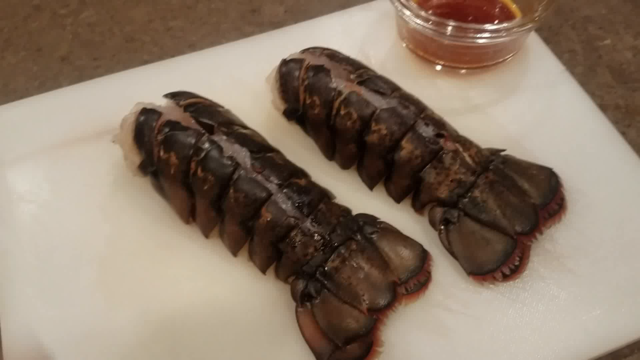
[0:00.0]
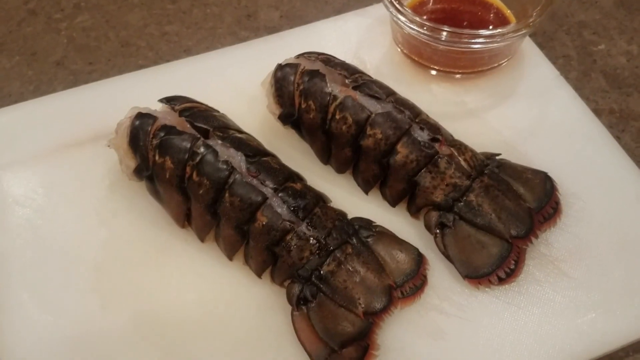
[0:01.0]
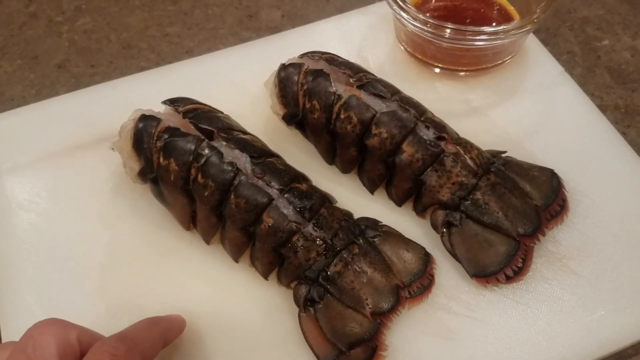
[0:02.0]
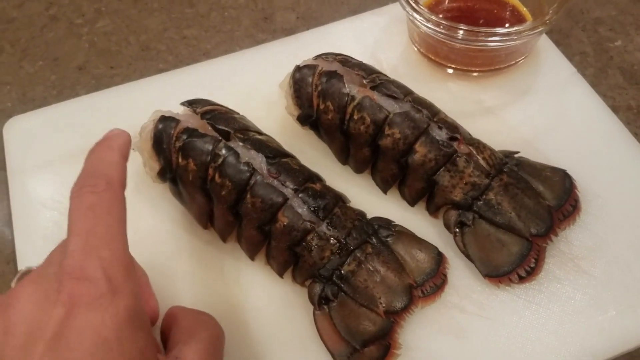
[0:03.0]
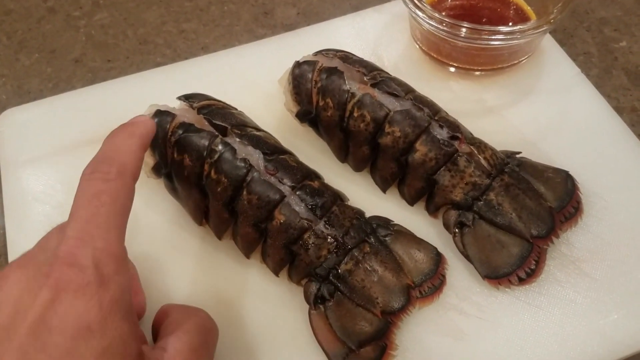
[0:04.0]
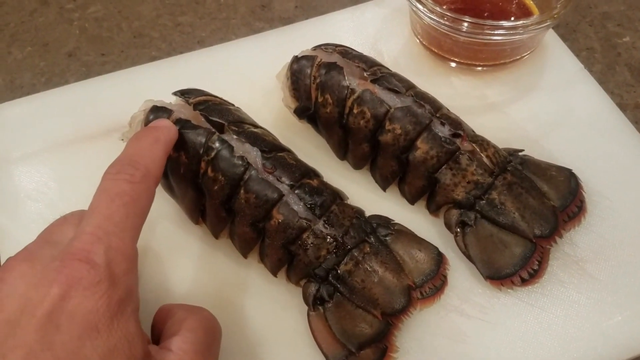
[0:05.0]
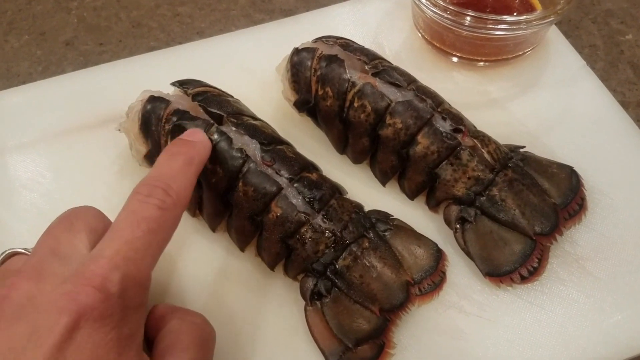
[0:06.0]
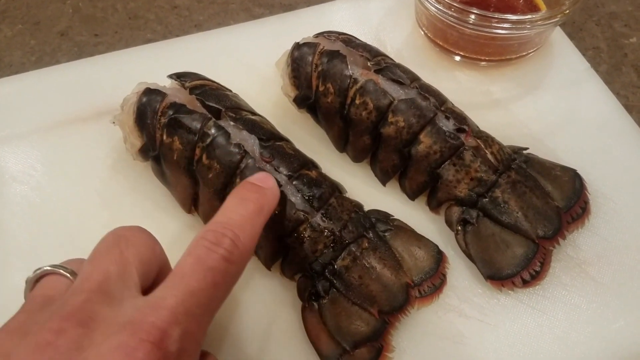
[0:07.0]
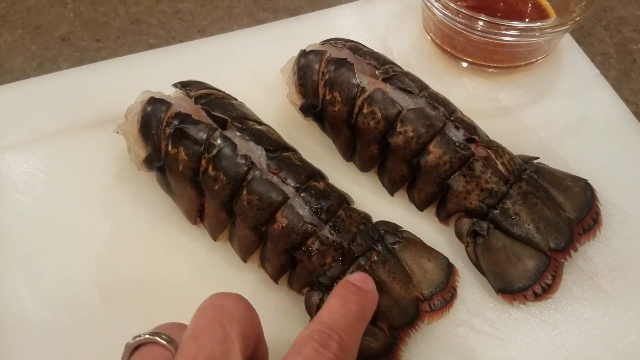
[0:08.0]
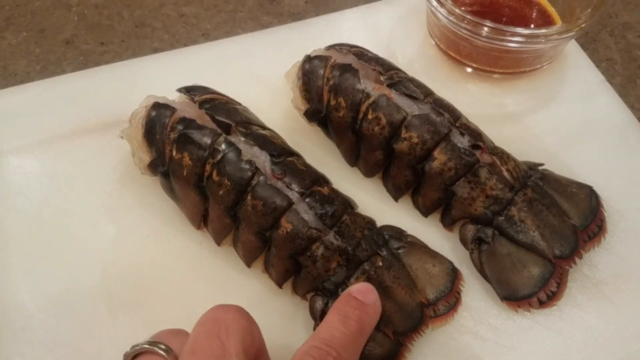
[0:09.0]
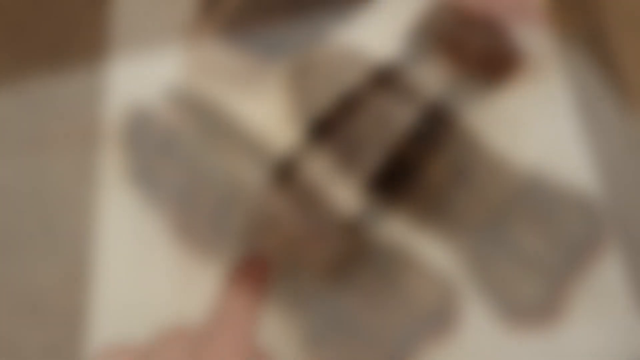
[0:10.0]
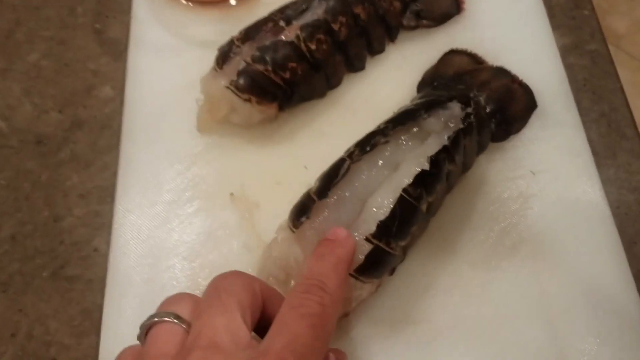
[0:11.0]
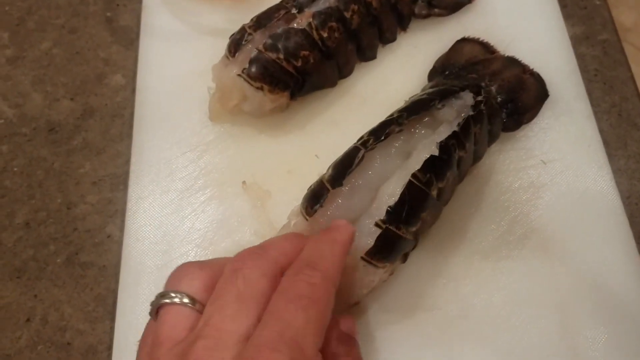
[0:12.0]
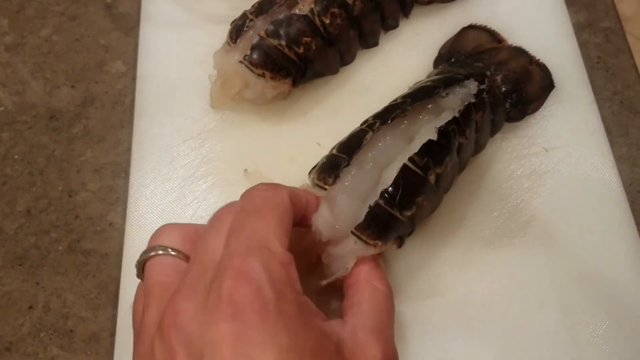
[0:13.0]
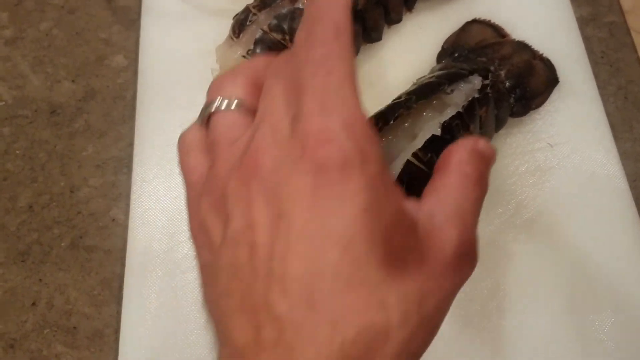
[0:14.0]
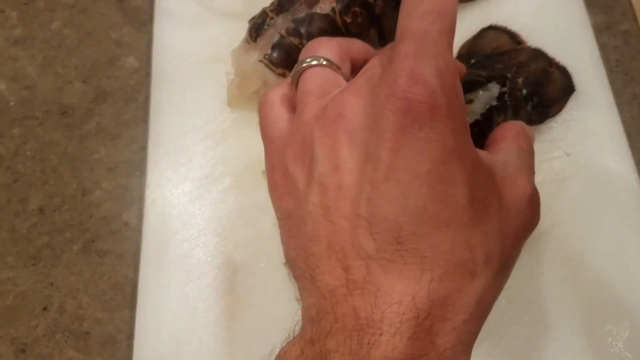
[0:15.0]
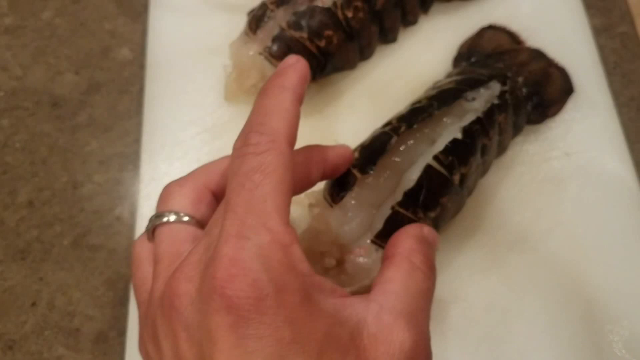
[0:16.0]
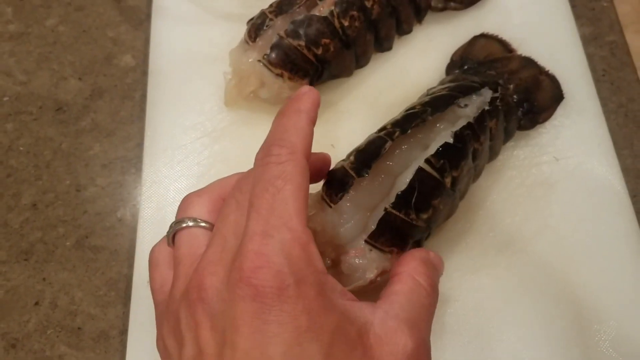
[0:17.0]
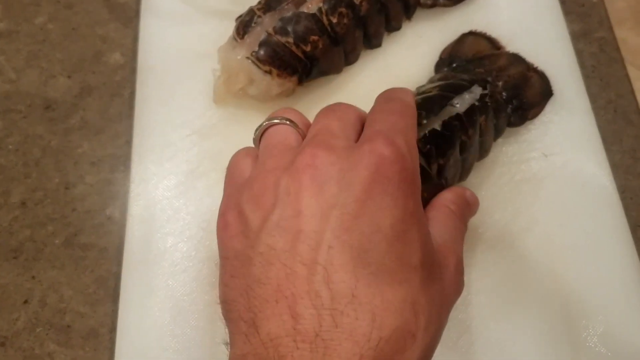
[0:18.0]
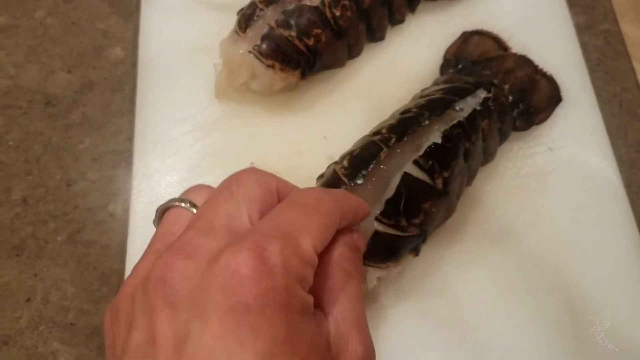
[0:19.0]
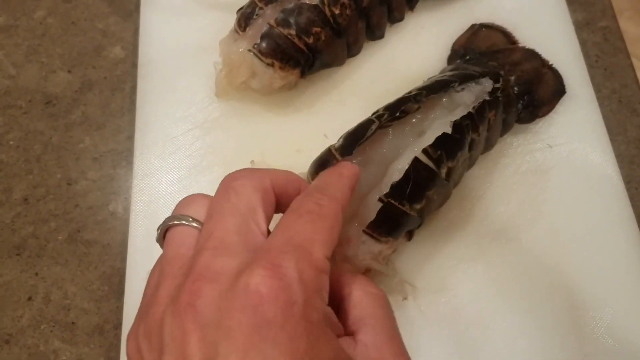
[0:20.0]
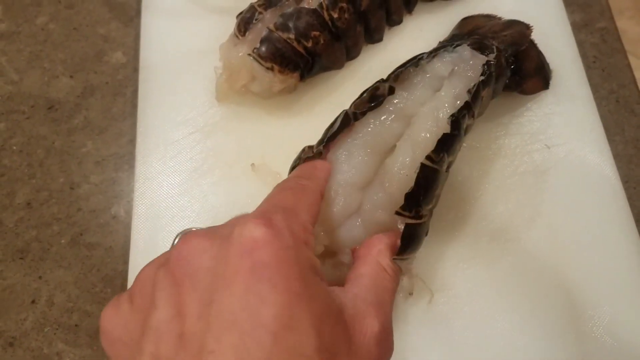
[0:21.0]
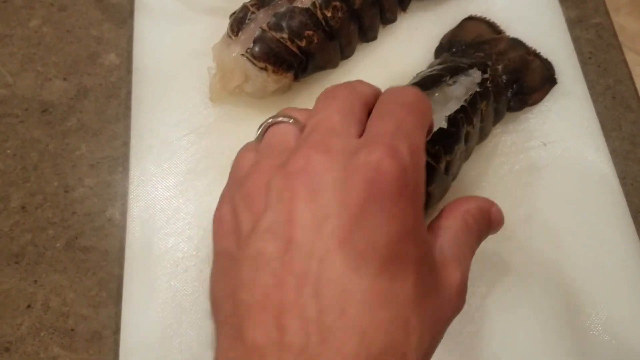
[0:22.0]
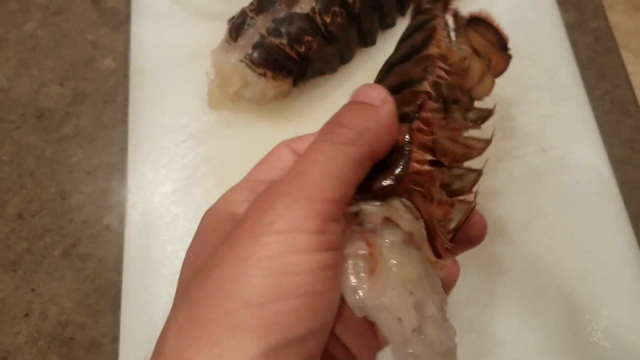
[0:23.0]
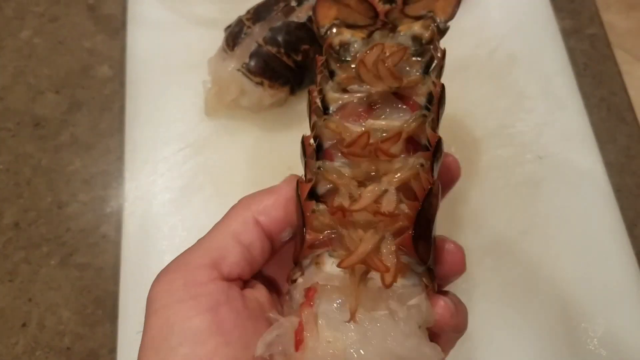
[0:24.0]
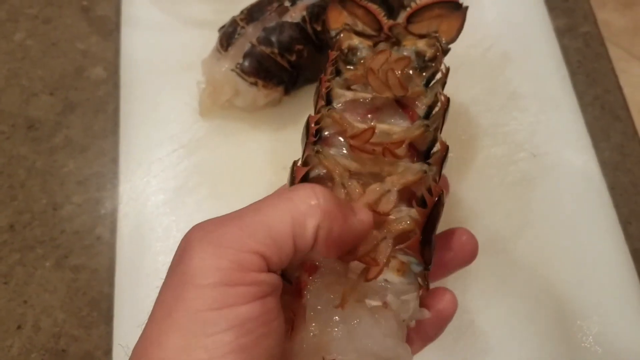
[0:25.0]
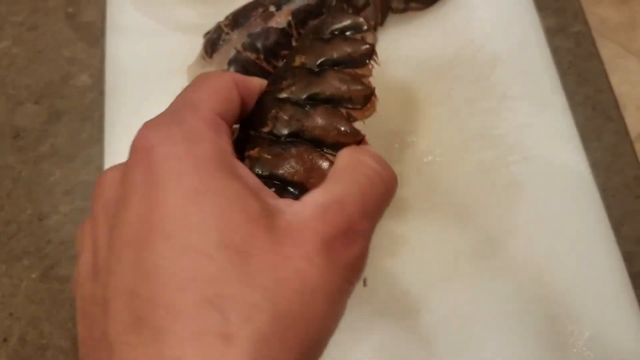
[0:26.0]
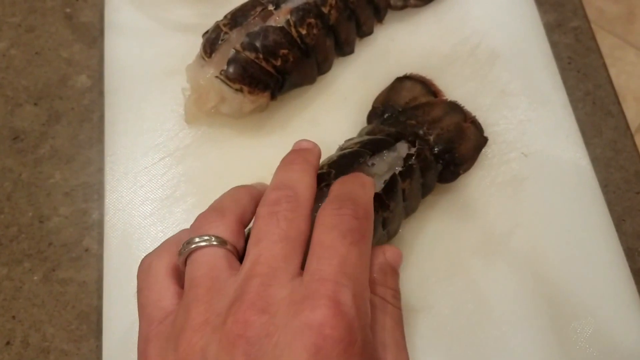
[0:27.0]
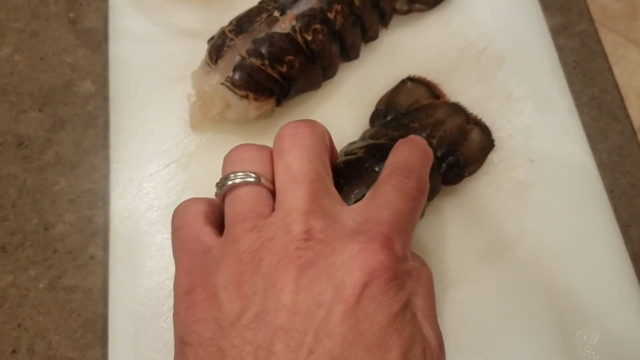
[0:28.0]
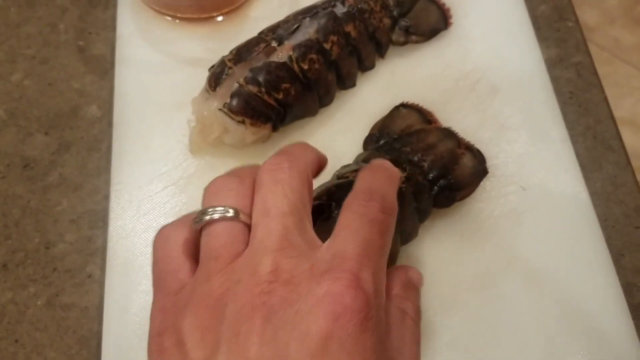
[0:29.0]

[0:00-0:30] A square white plate is on a kitchen counter. In the top right corner of the plate is a small clear bowl with a reddish sauce in it, and in the middle of the plate are two large black lobster tails, facing down with their feet on the plate. The camera moves in and zooms into the tails. A hand can be seen pointing at the tails, and the person touches the scales or shell of the black lobster tails from top to bottom. The camera changes angle, showing the same lobster tails cut along their back from the top to the tail. They are cut open, exposing the white lobster meat. The hand touches the white meat, closing and opening the tail to expose it.